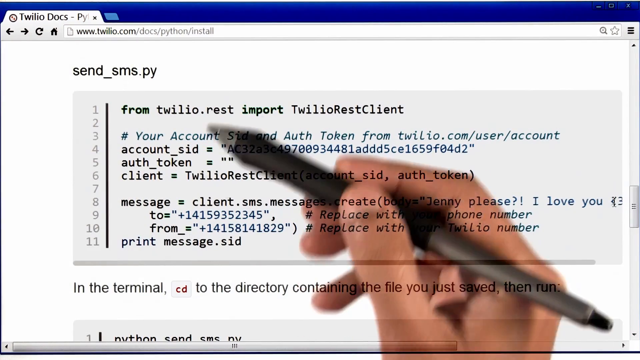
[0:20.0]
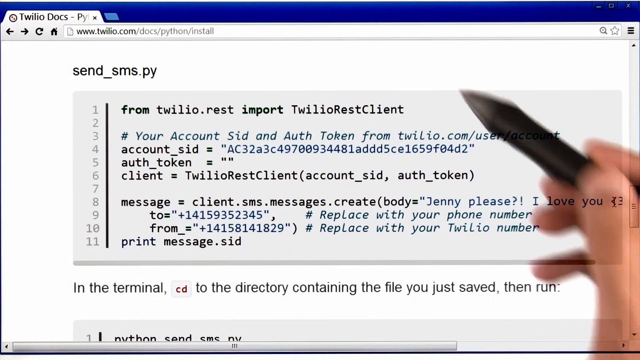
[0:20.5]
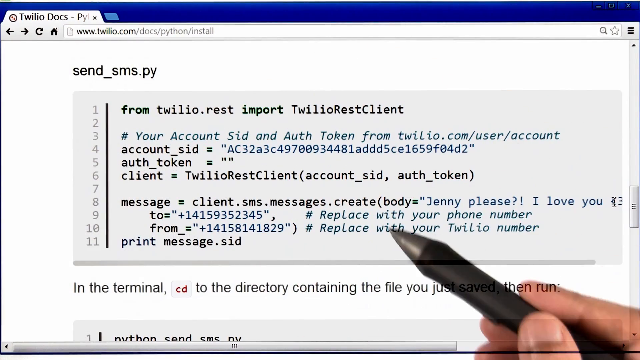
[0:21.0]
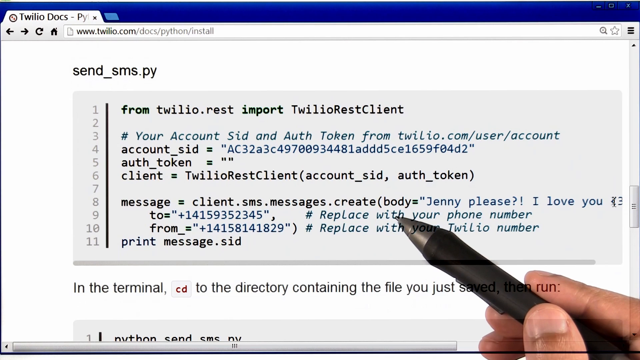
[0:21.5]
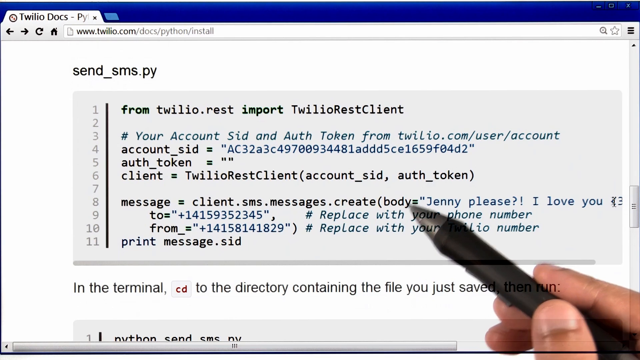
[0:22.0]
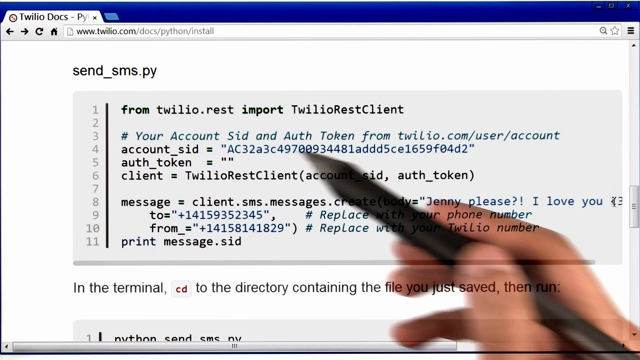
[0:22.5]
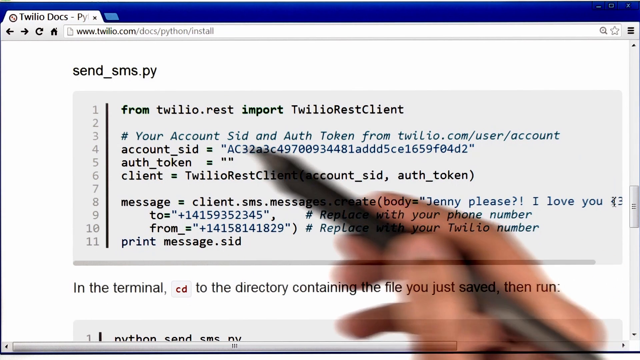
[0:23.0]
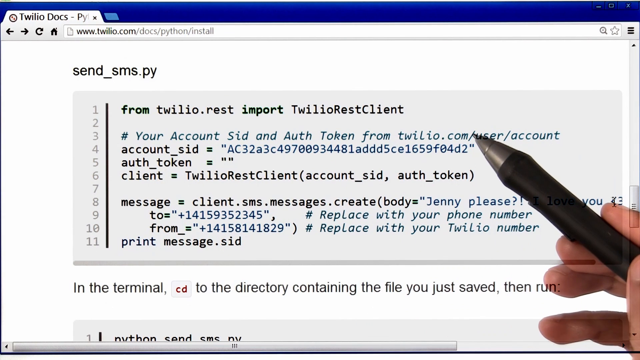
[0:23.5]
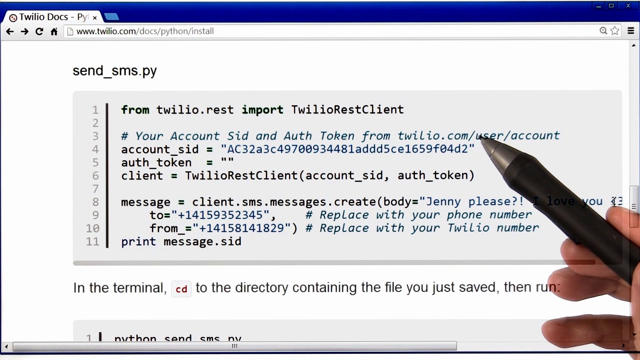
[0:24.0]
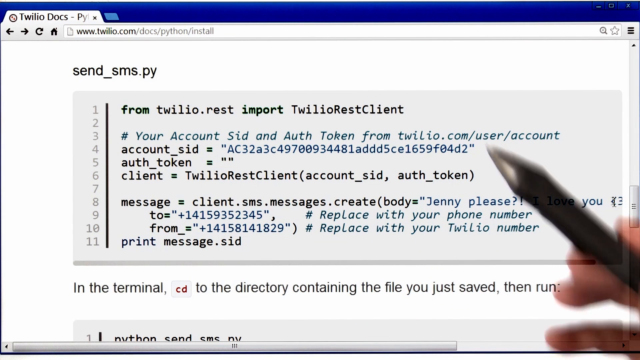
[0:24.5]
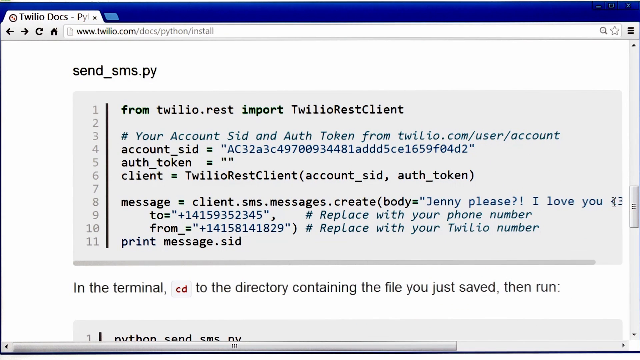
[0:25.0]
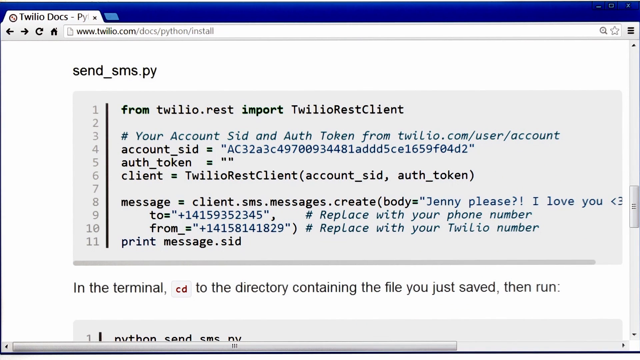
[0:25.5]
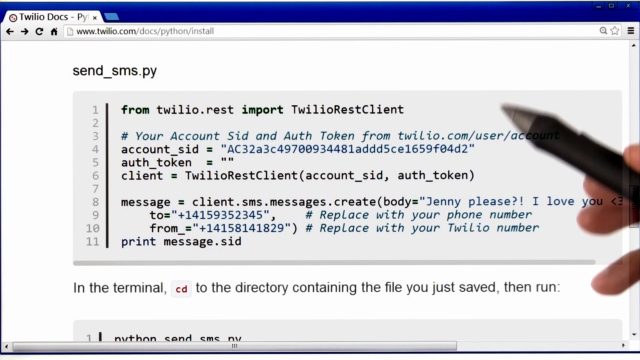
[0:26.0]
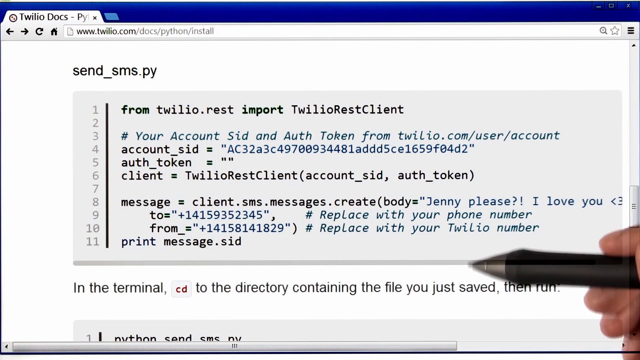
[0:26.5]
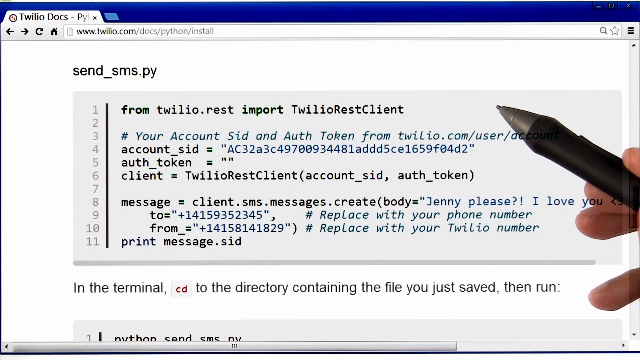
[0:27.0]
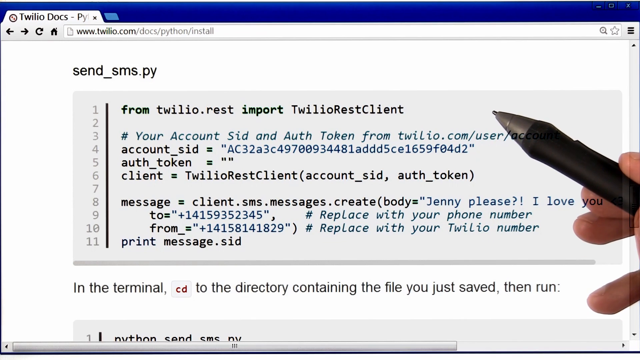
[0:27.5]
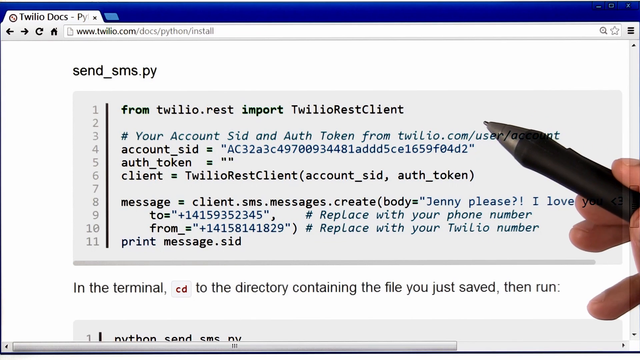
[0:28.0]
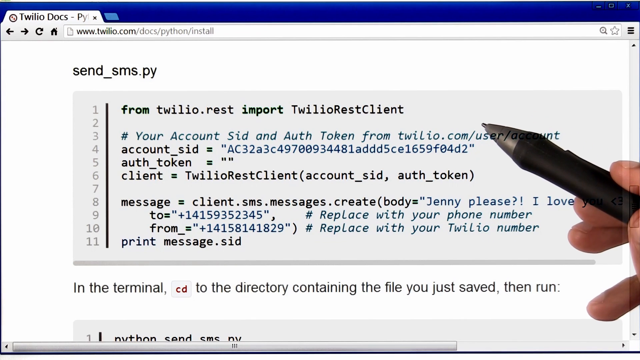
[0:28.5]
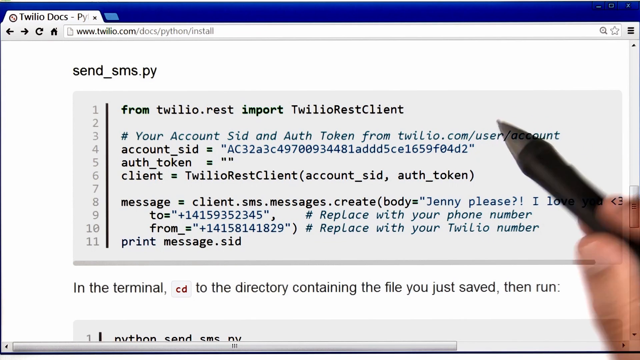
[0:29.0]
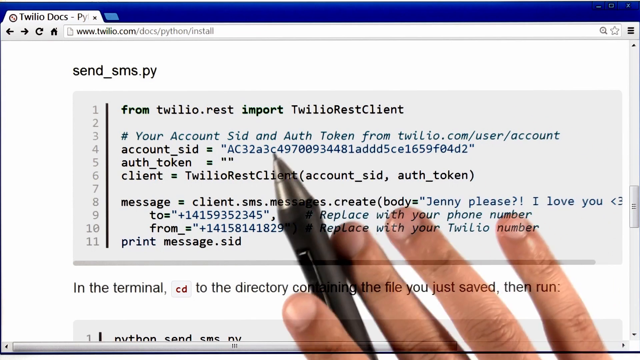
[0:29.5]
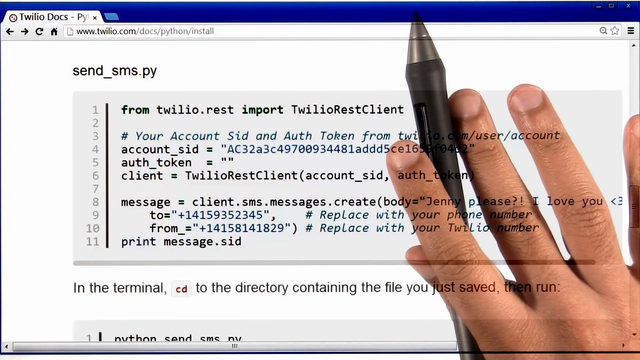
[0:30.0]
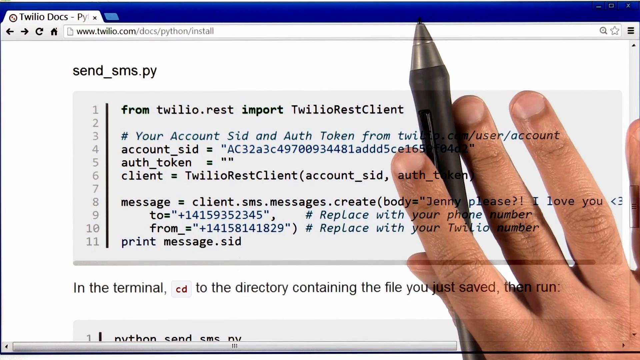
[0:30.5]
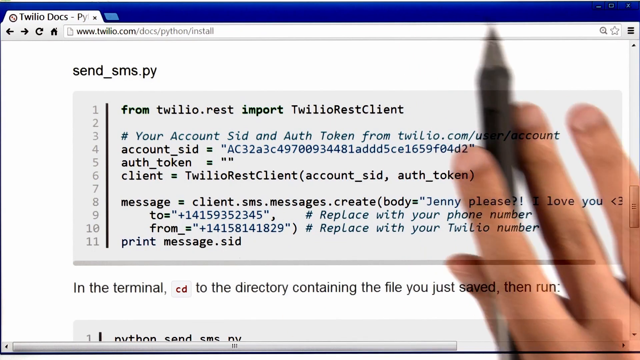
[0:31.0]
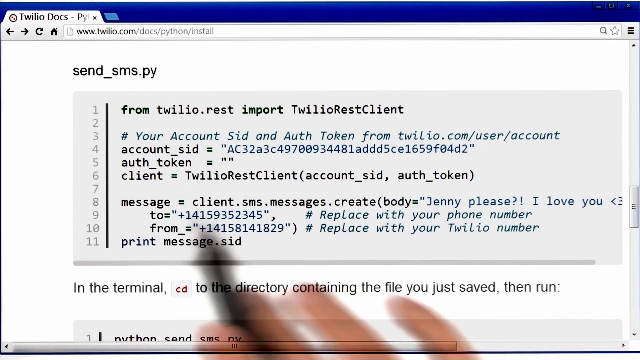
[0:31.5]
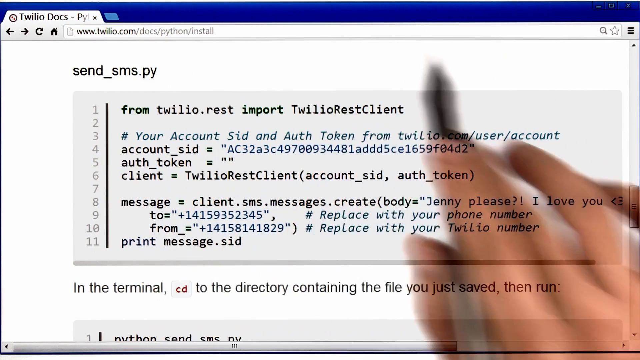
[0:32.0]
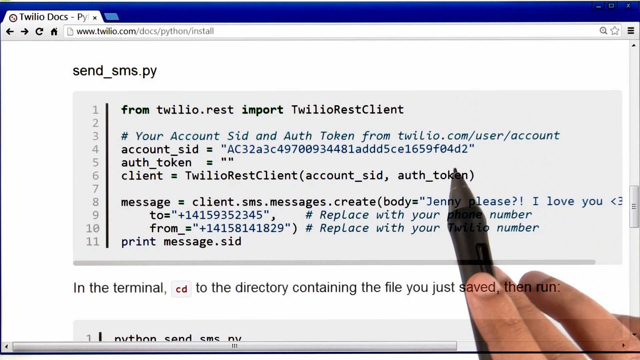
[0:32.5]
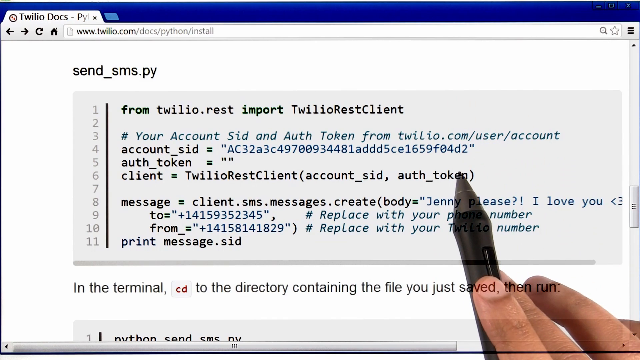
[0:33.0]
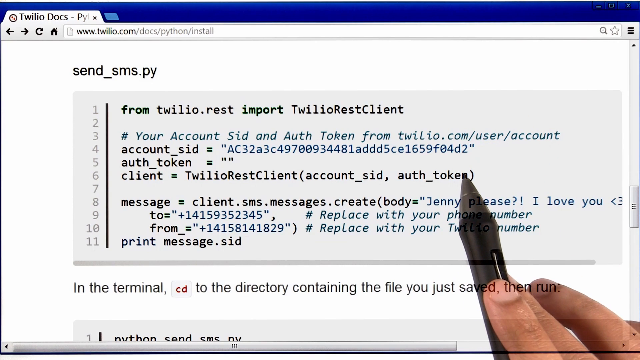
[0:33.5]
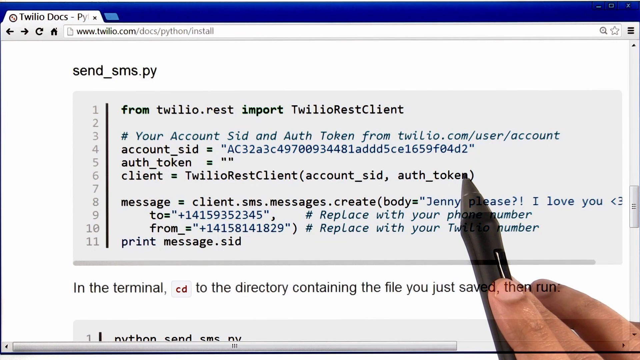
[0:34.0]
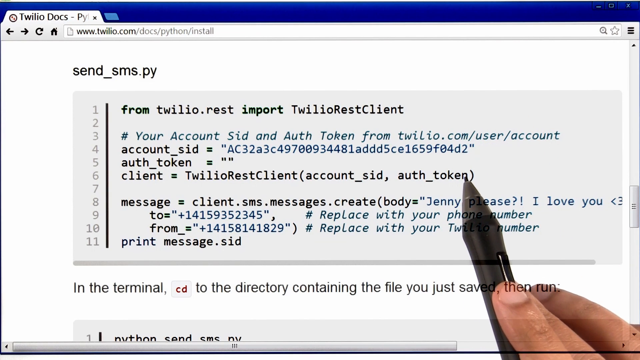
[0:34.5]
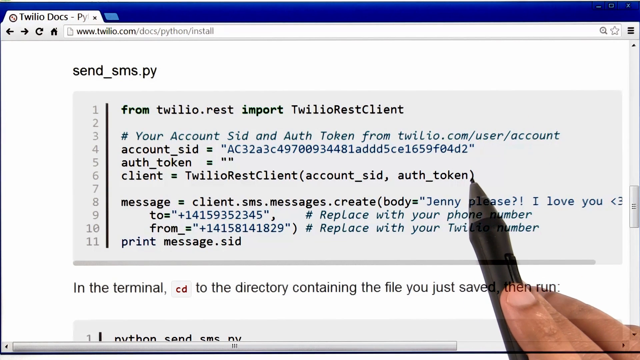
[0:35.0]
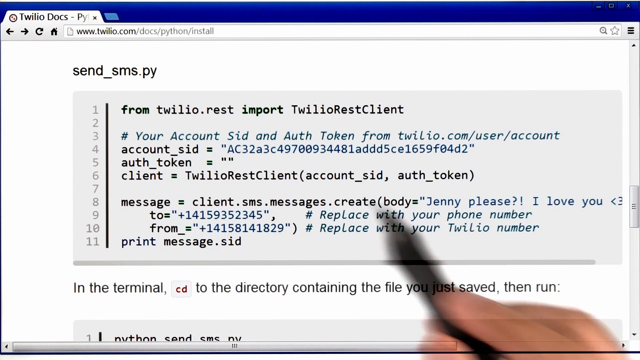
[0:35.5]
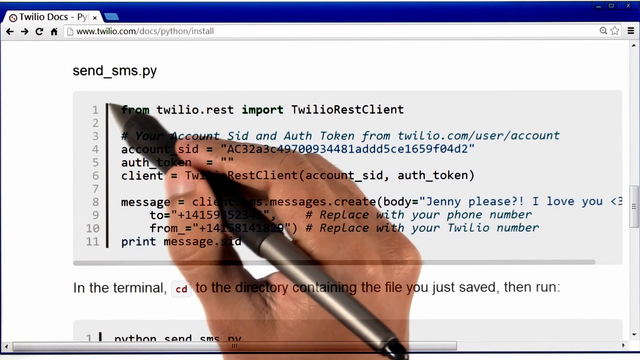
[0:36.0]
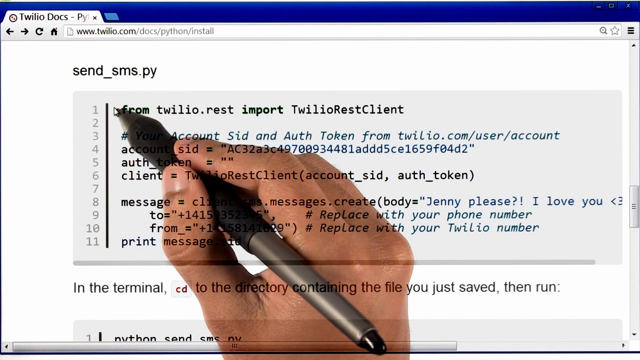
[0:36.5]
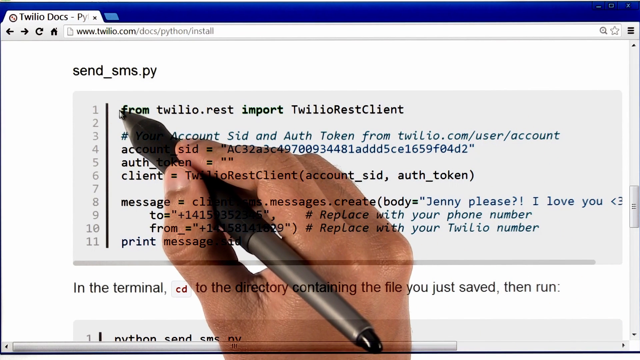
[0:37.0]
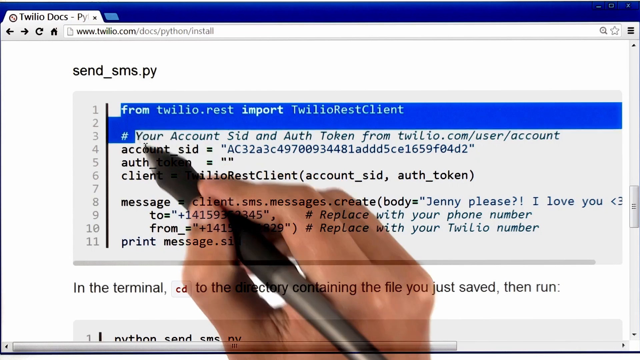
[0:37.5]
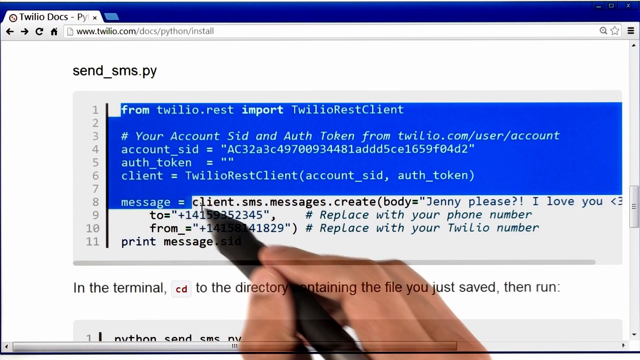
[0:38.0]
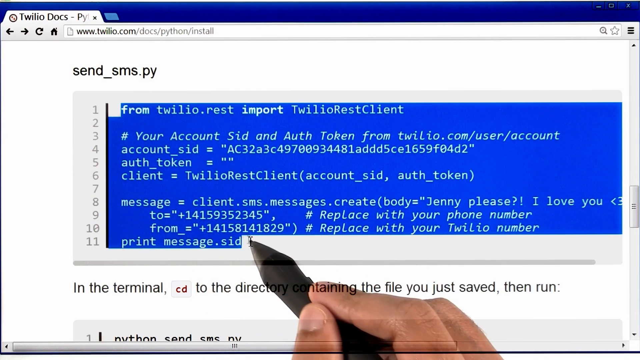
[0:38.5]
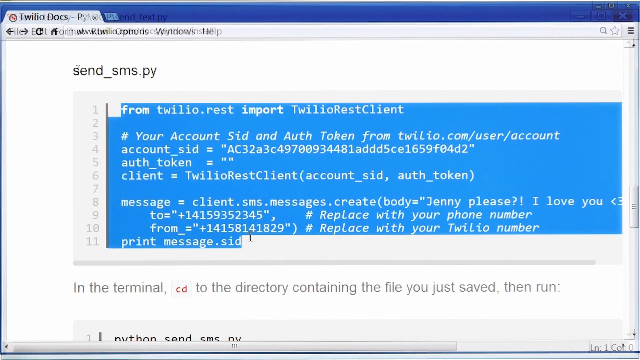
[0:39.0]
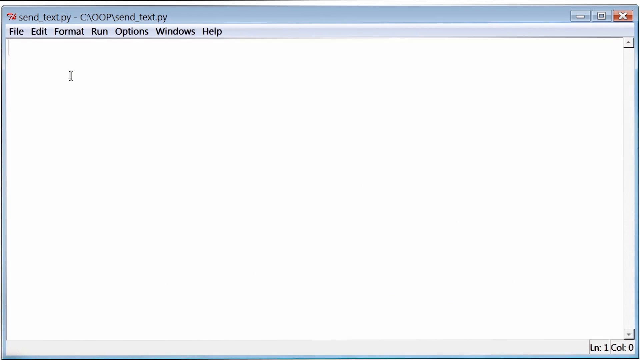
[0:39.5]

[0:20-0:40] Python code is on the screen. With the pen in his right hand, he hovers over certain lines of the code, moving his hand back and forth and up and down in circular motions to point out particular lines. He then highlights all 11 lines of the Python code. After the highlighting, the screen cuts to white.